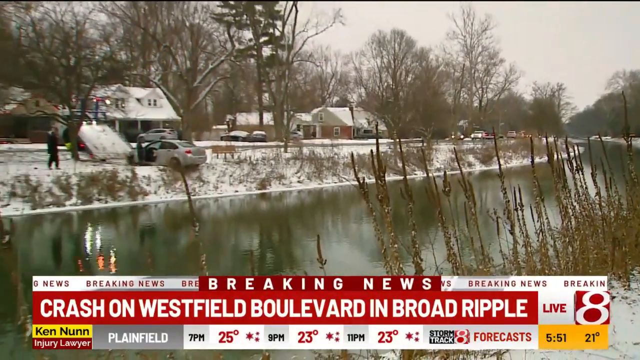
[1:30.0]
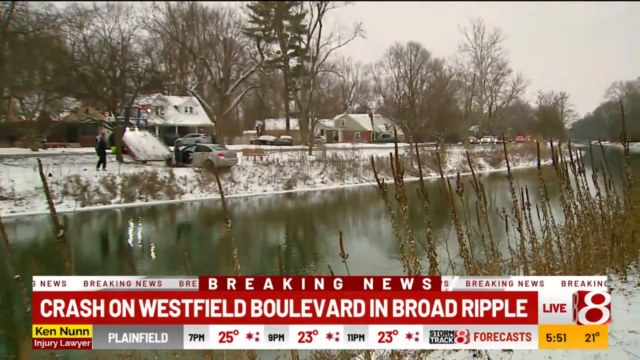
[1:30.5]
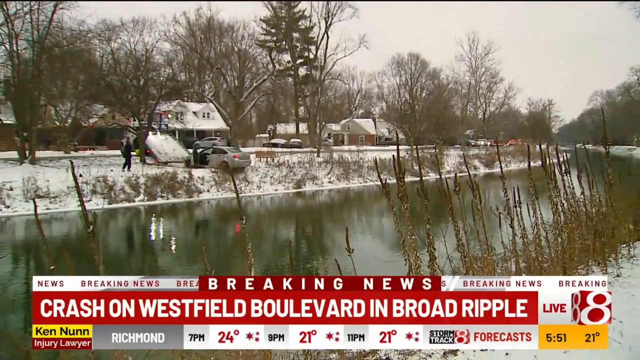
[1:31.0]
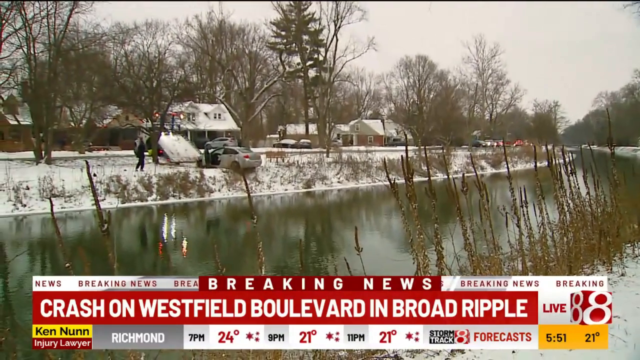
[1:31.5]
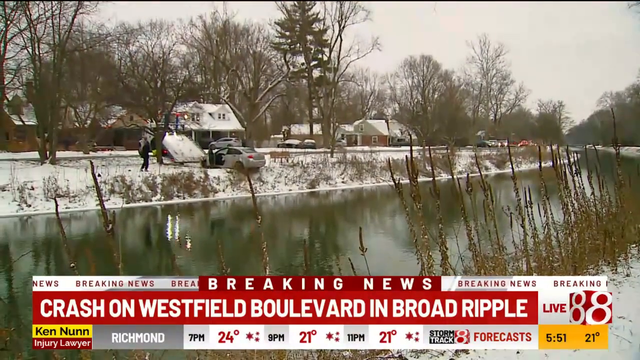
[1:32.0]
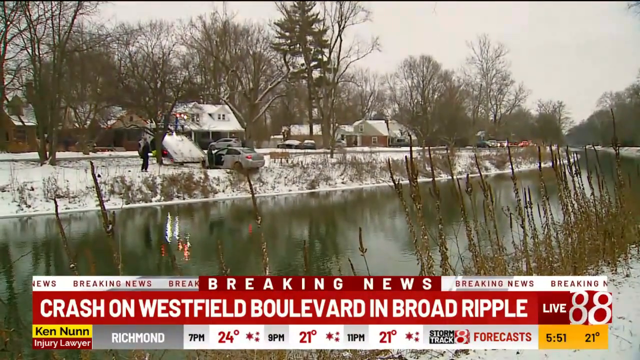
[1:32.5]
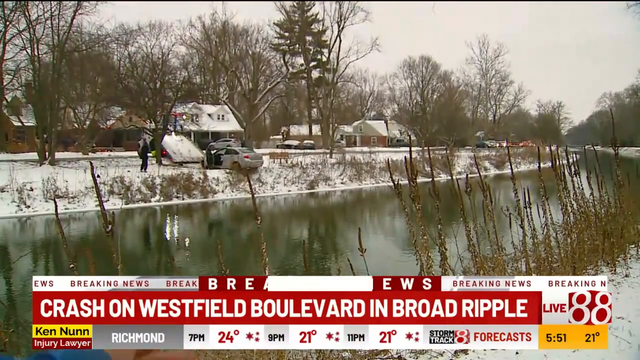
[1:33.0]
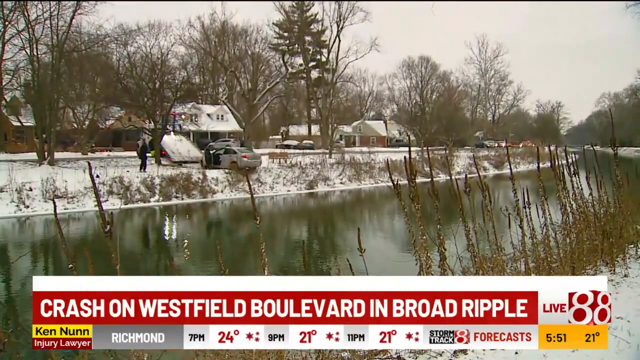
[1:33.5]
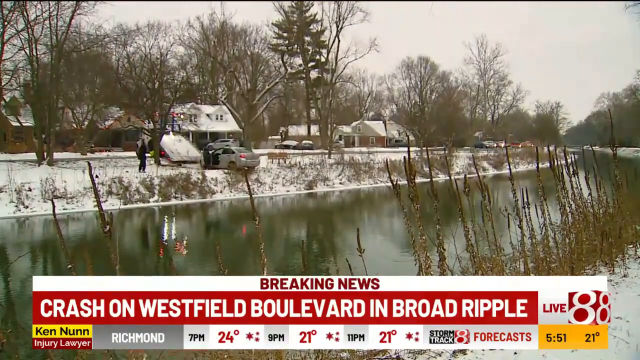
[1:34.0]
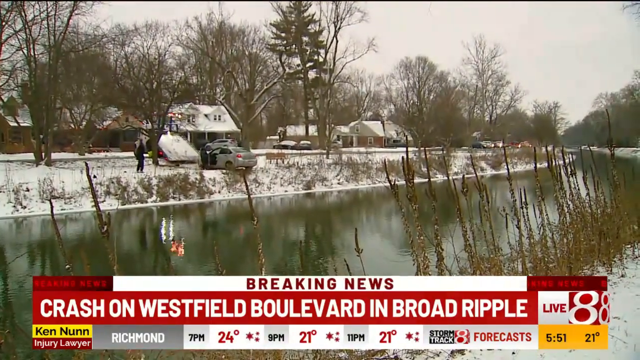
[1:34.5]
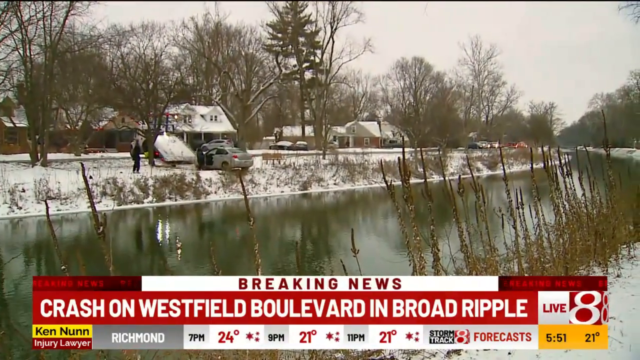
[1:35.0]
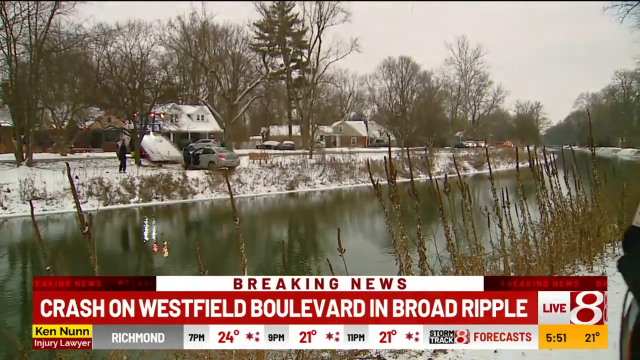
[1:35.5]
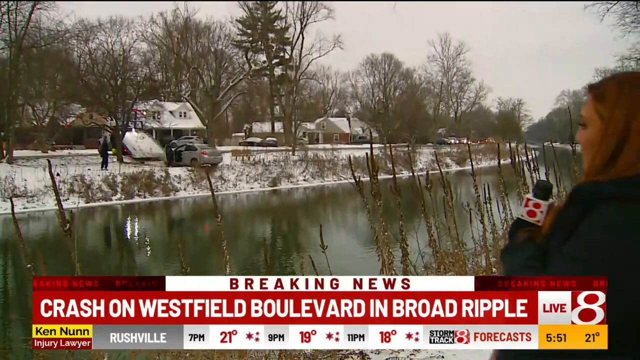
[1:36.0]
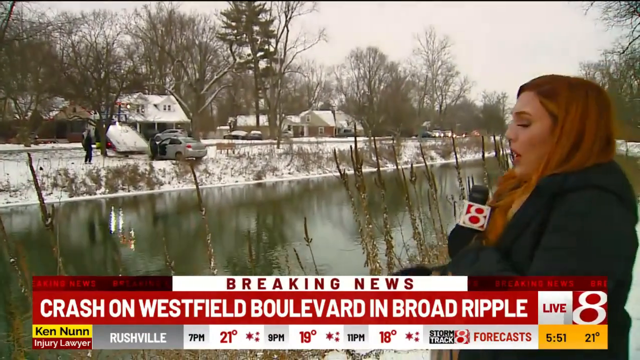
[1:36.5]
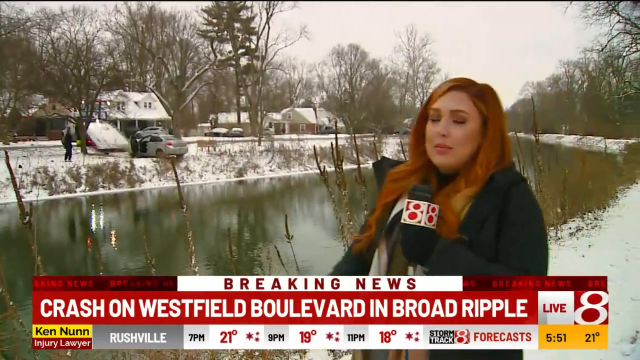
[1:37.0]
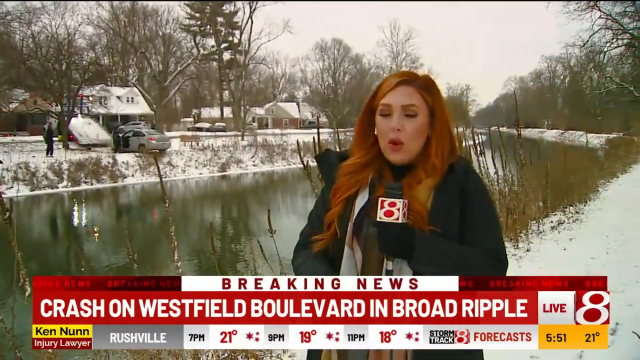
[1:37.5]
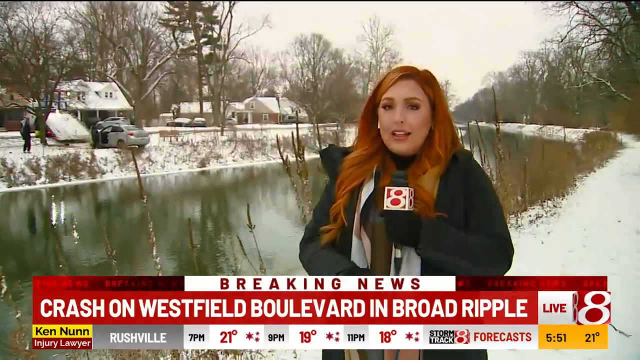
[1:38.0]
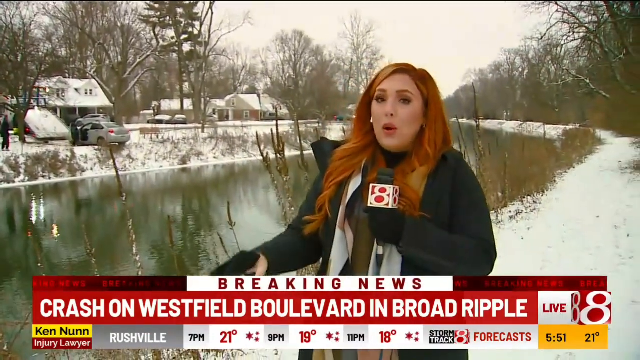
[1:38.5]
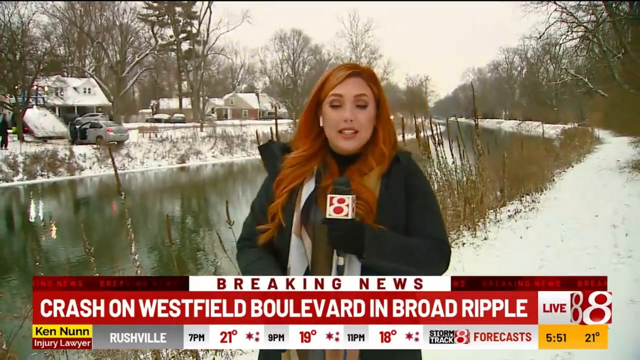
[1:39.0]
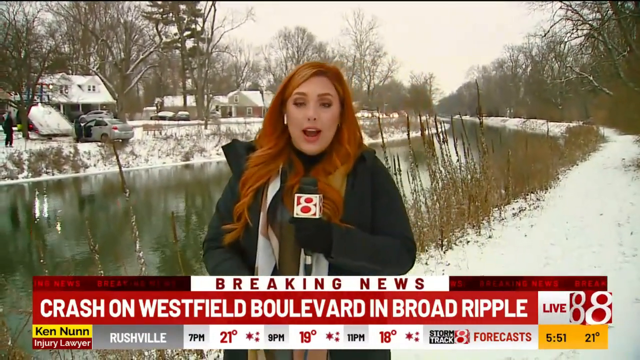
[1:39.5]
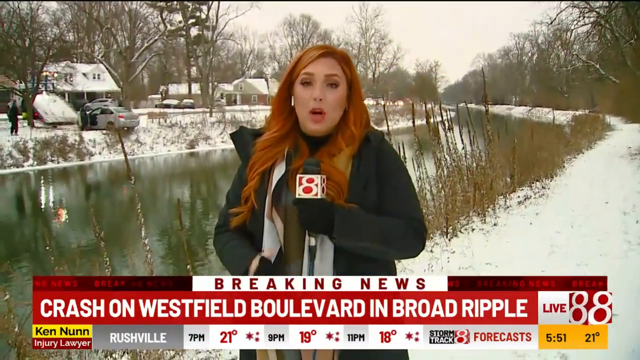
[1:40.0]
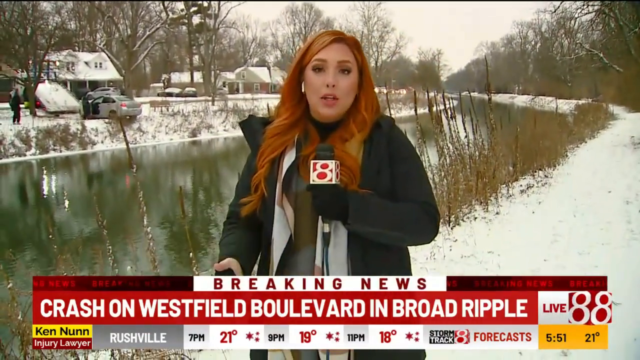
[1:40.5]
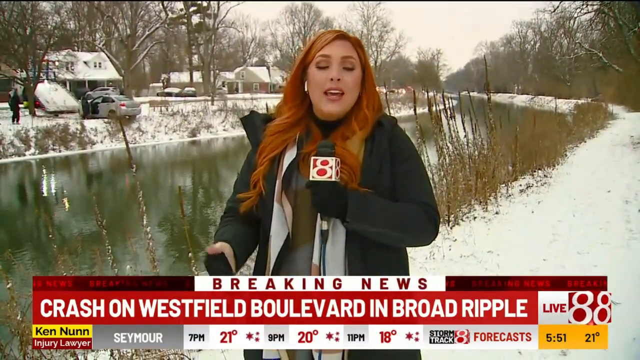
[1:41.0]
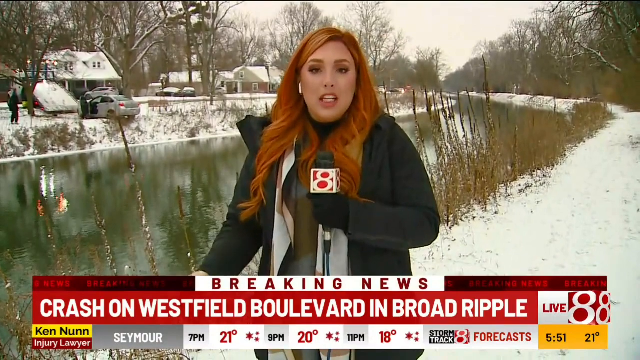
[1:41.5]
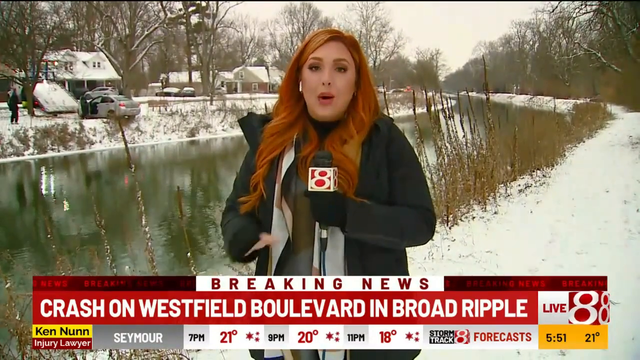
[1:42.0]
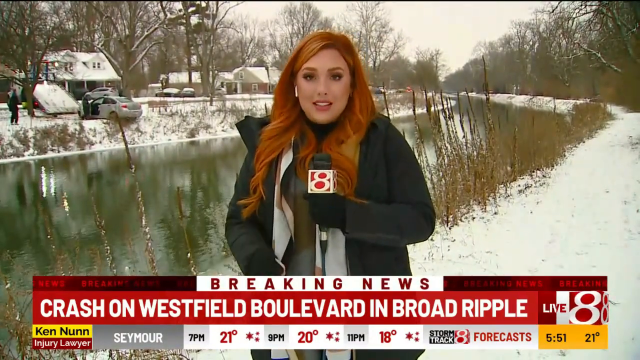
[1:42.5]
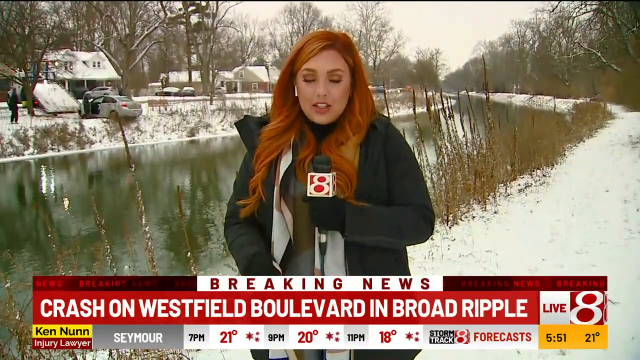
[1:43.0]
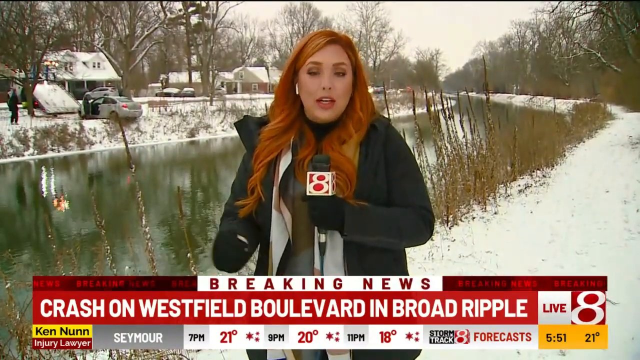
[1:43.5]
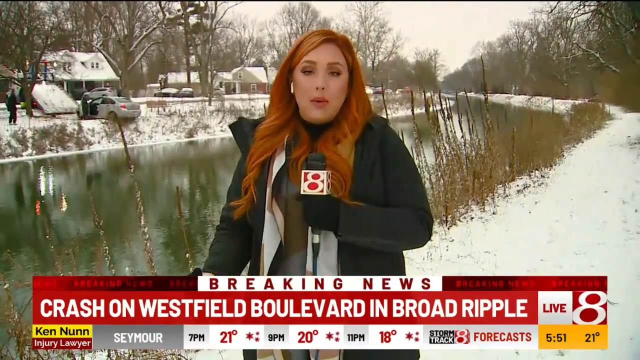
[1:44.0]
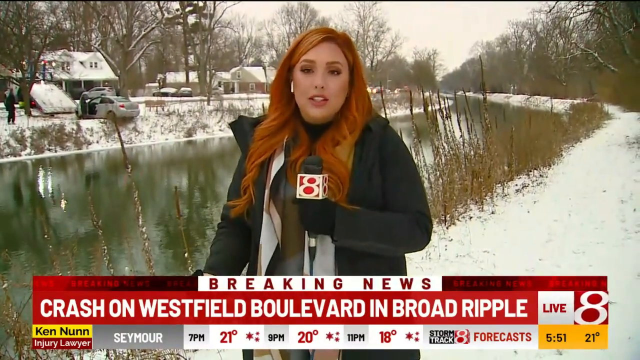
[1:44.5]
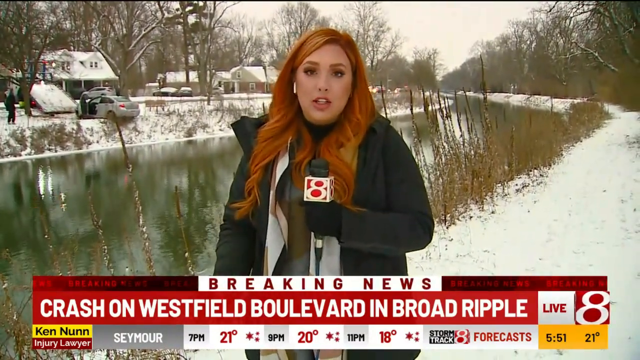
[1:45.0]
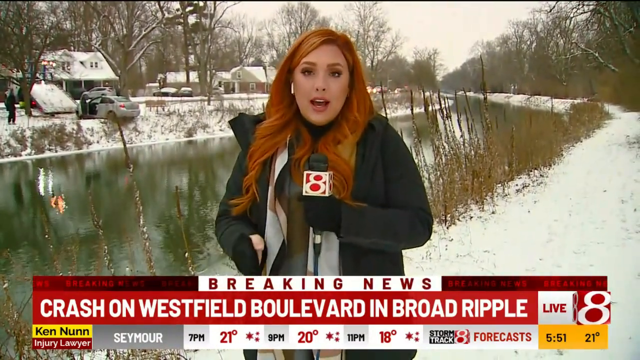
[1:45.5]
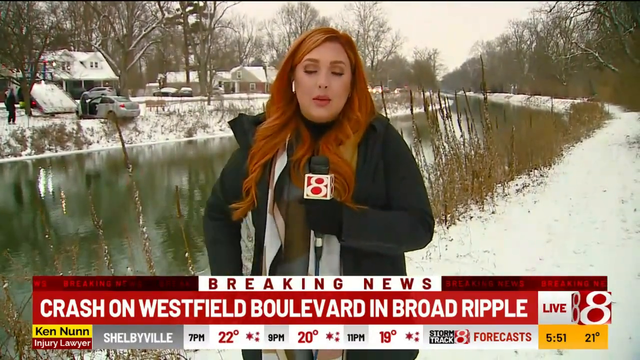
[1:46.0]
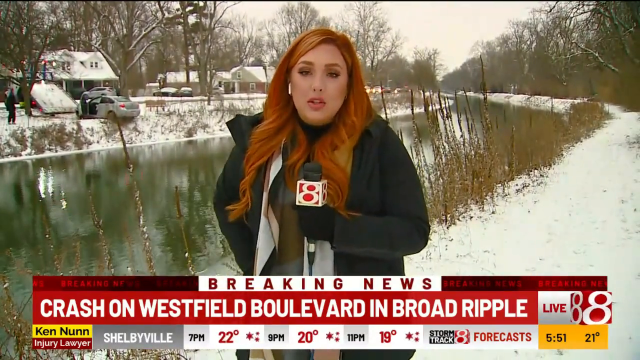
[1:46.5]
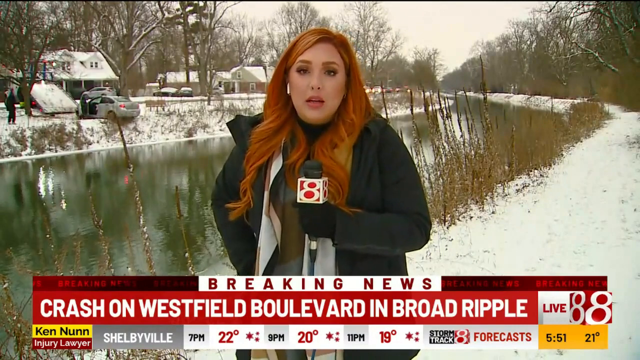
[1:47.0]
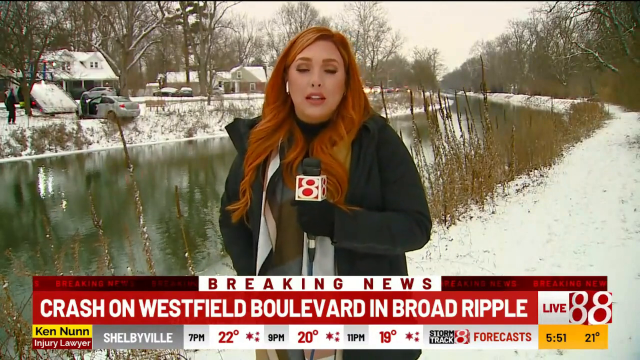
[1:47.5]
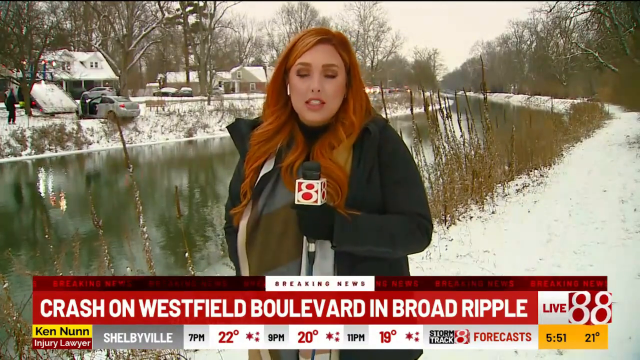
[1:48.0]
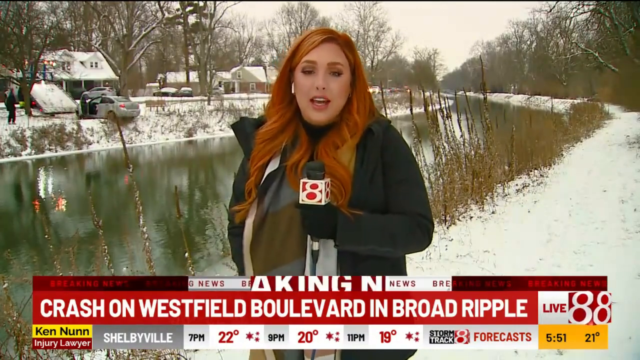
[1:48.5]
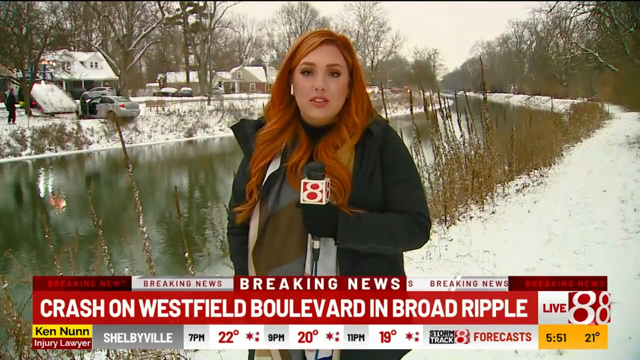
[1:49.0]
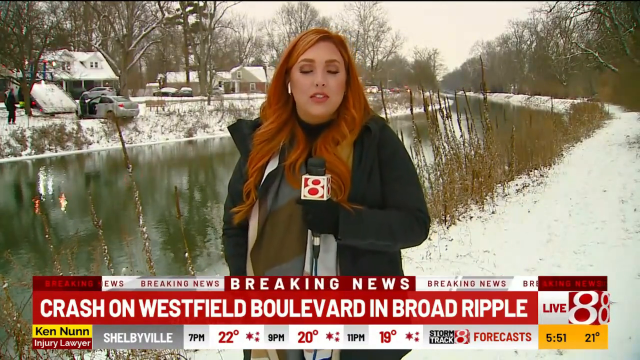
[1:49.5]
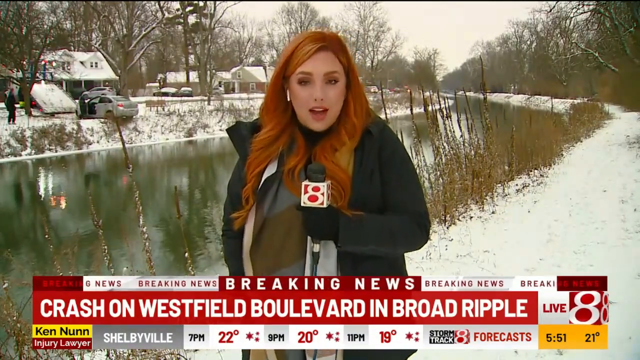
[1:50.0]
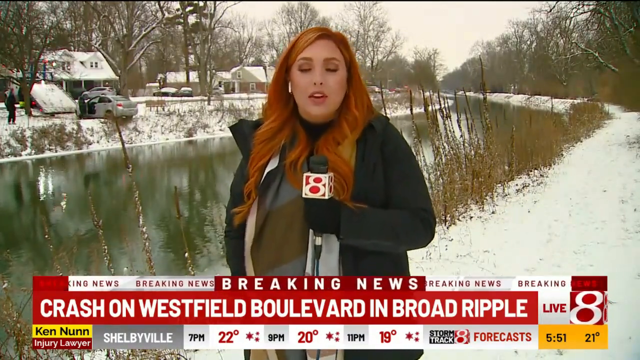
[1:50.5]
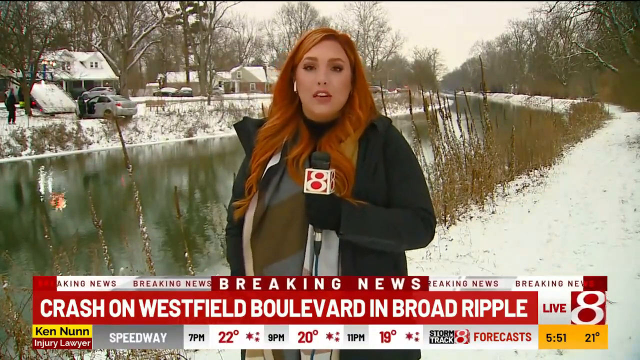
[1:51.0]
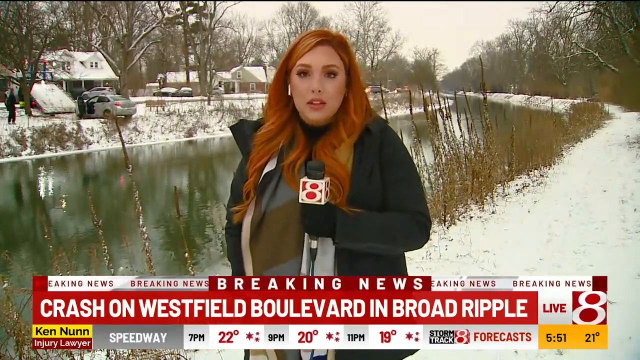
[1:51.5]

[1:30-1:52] The headline "Breaking news, crash on Westfield Boulevard in Broad Ripple" is at the bottom of the screen, and "Breaking news" flashes. A river comes into view, with snow on the ground and icy conditions. A news reporter then appears, holding a microphone with the 8 News Network logo on it. She has red hair and wears a black coat and gloves, and she talks to the camera. It is very cold where she is, with snow on the ground. The words "Breaking news" at the bottom of the screen are highlighted. The shot ends with the reporter talking to the camera and a vehicle behind her that has been involved in an accident.